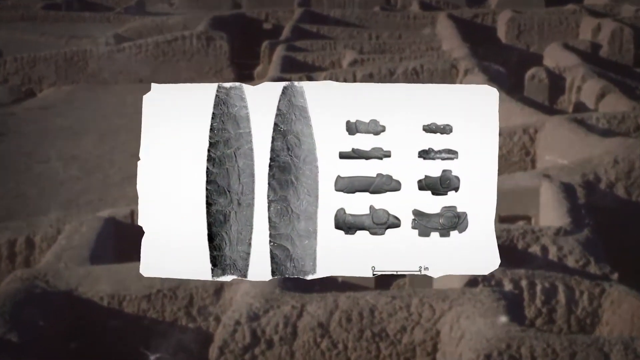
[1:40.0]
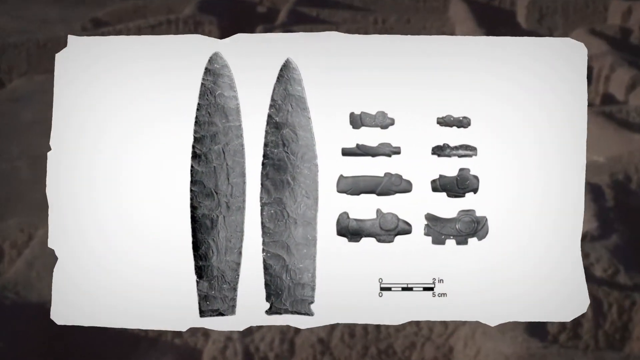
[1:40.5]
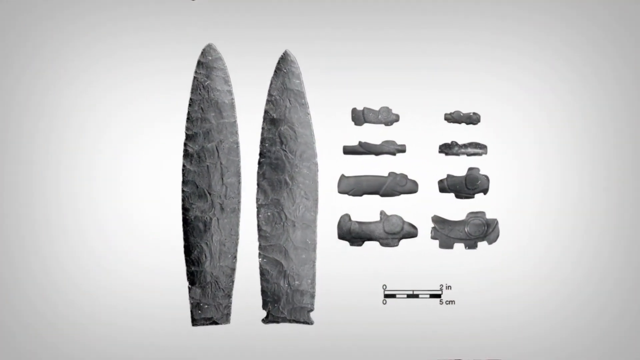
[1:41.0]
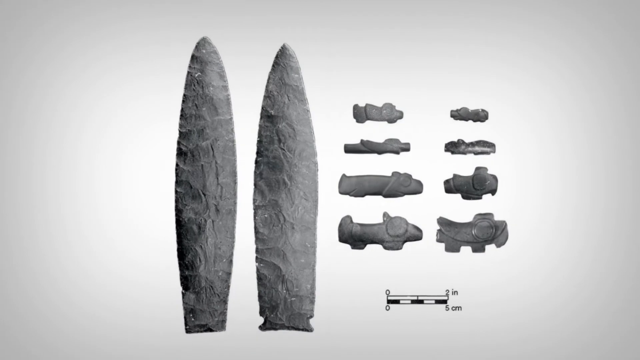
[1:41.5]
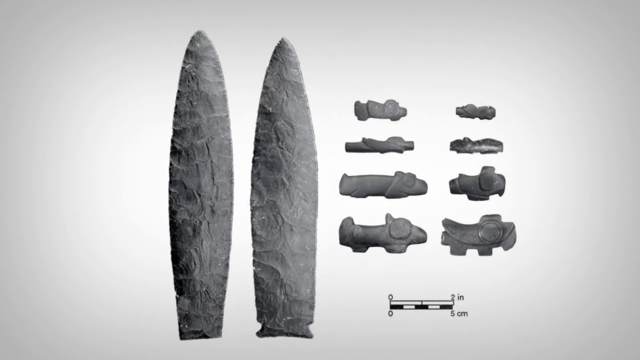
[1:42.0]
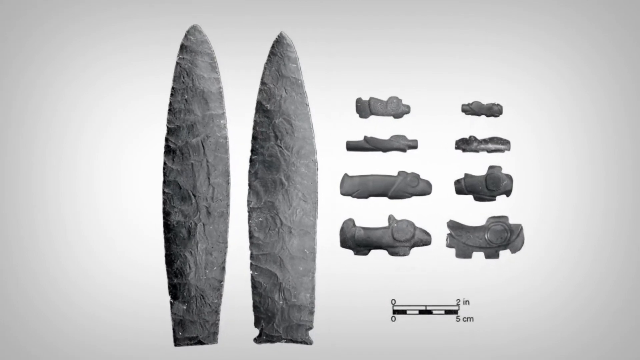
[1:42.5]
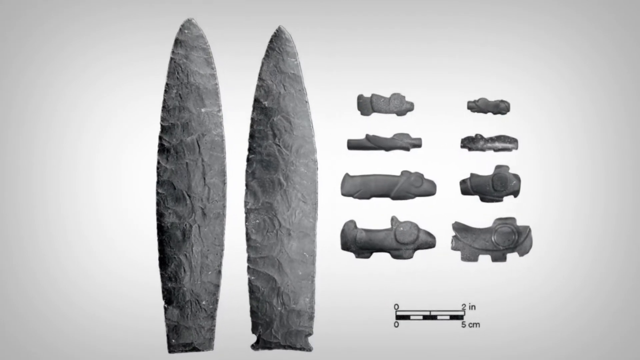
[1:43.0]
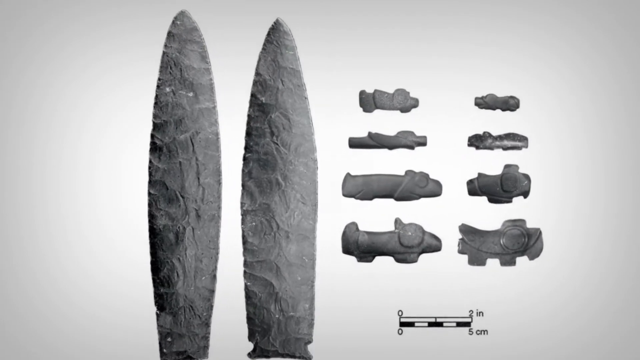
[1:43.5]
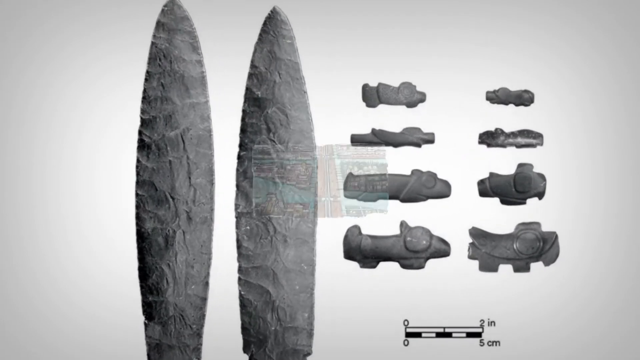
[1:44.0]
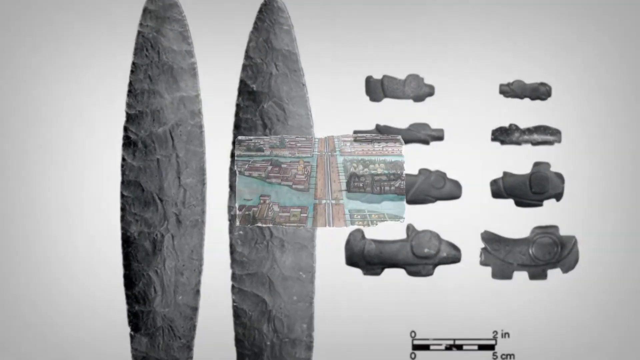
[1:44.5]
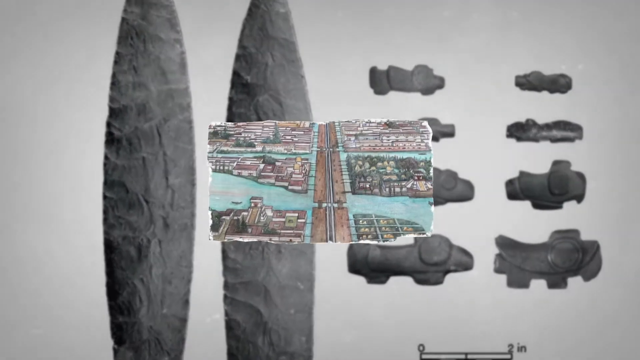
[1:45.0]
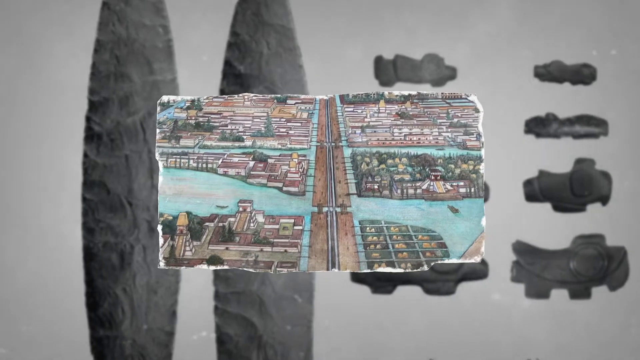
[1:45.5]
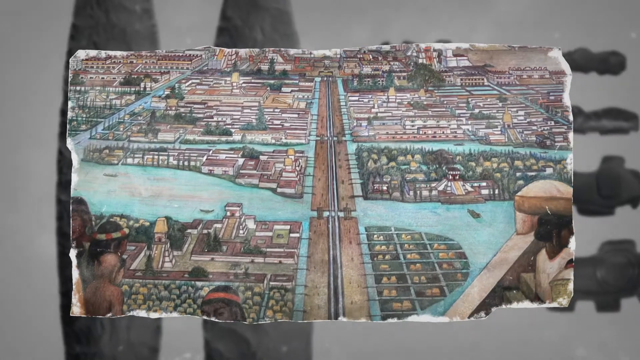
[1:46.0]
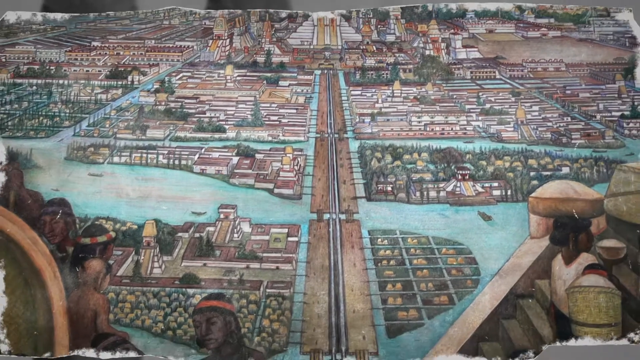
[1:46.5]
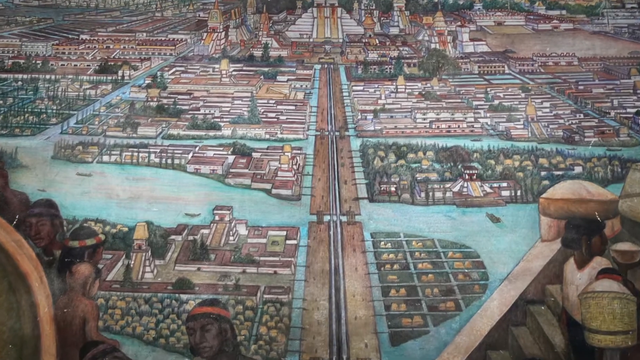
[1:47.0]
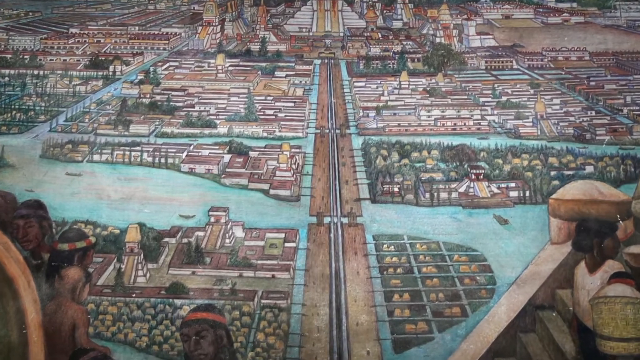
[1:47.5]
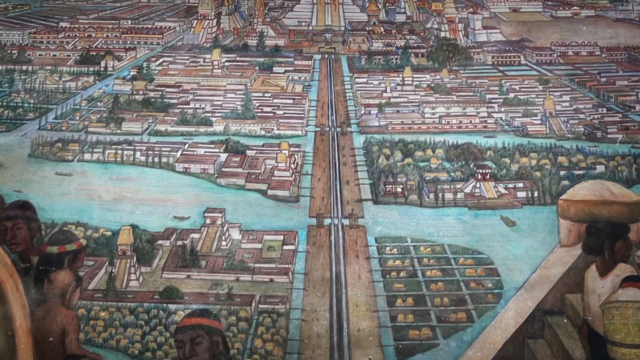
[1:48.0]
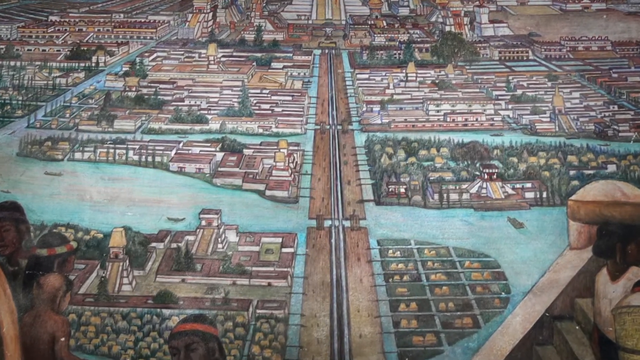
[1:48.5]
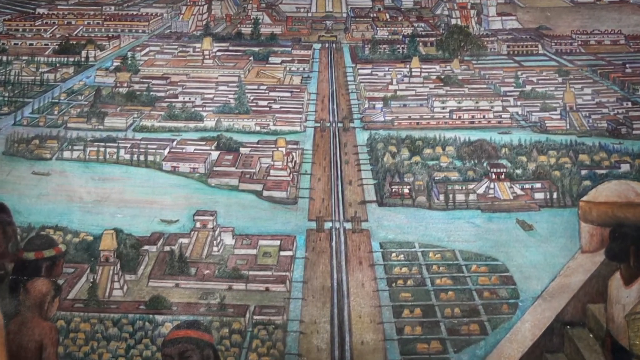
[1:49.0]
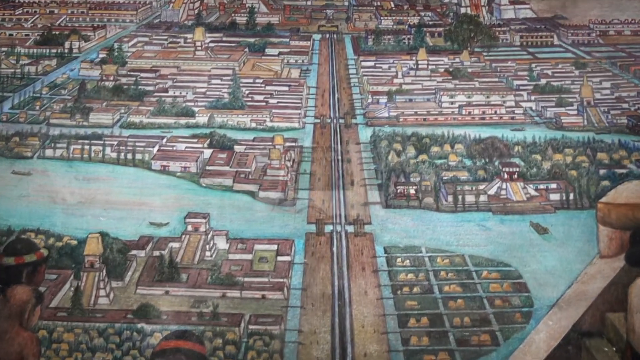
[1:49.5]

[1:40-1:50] Flint objects retrieved from the archaeological dig are shown against a white background in a rectangle covering about a third of the screen, with the dig visible in the background behind all of its edges. The camera zooms in on the flint pieces: two large pieces on the left and two vertical rows of four pieces on the right, each row arranged from smallest at the top to largest at the bottom. A scale at the bottom right of the screen shows that the smaller pieces are less than two inches long and the larger ones about nine or ten inches long, suggesting they are possibly spearheads rather than arrowheads. The camera zooms in on the scale, then swipes away to an illustration of an ancient city.